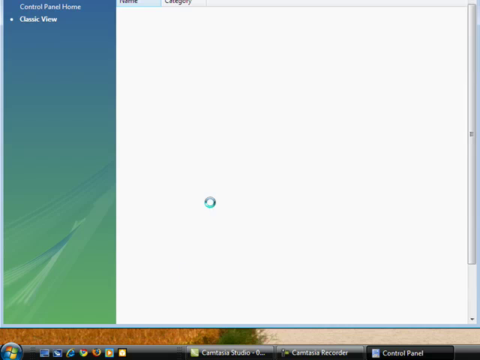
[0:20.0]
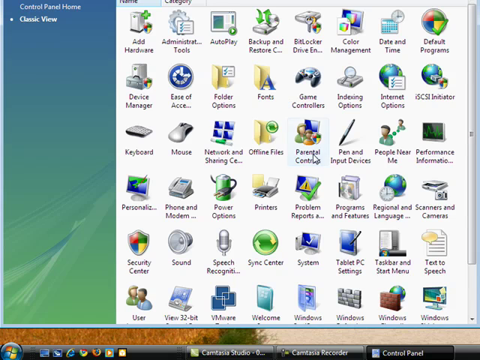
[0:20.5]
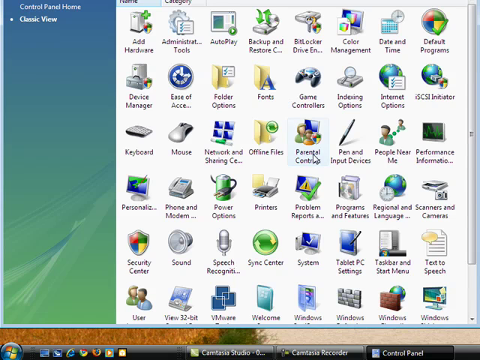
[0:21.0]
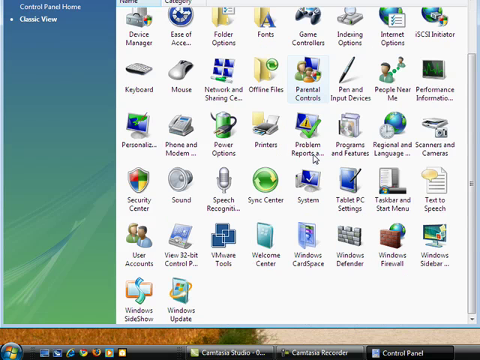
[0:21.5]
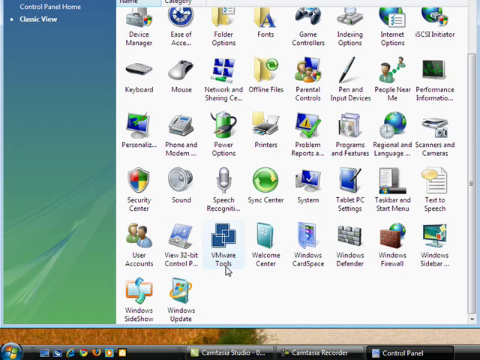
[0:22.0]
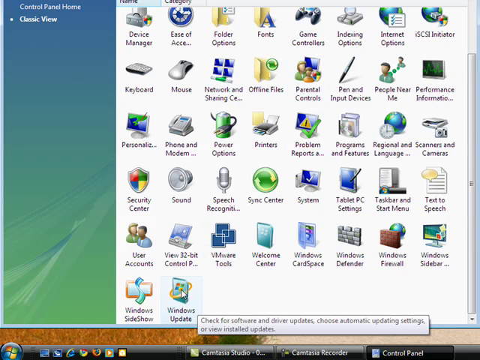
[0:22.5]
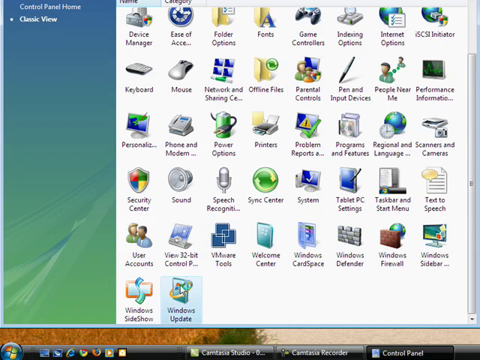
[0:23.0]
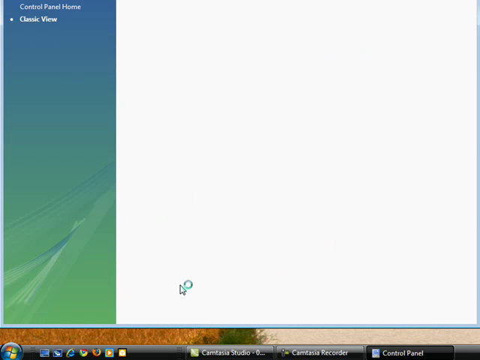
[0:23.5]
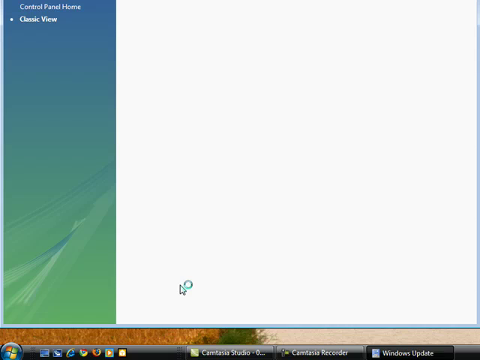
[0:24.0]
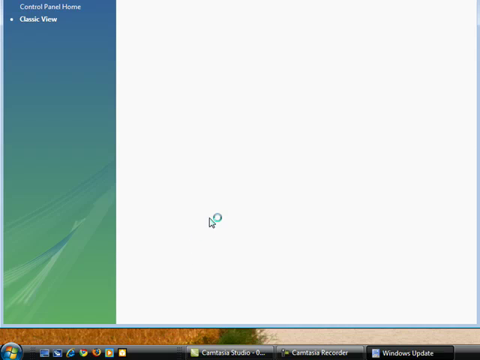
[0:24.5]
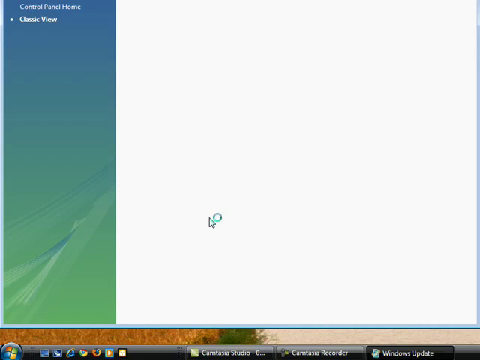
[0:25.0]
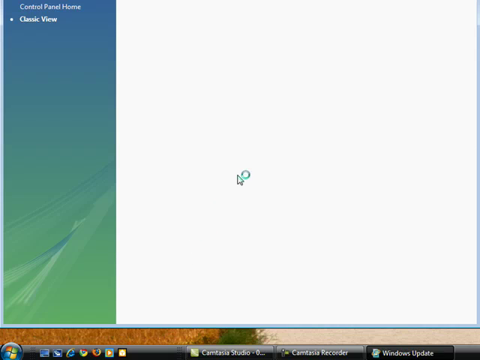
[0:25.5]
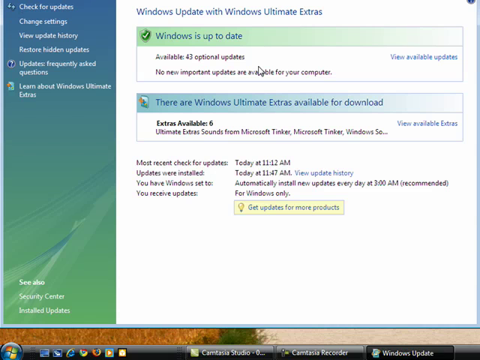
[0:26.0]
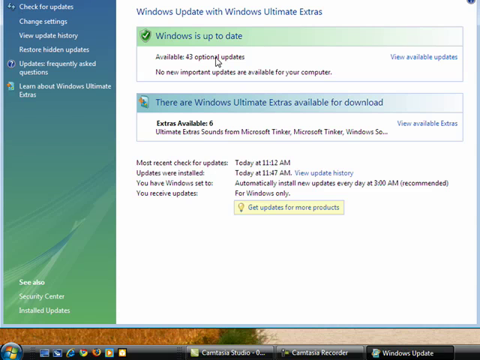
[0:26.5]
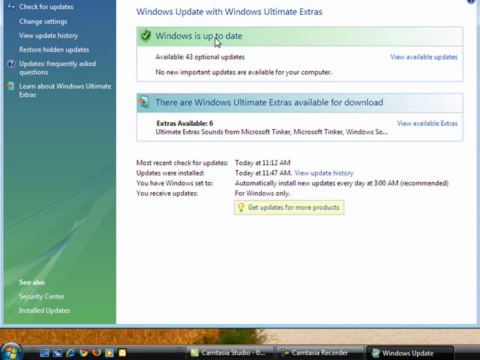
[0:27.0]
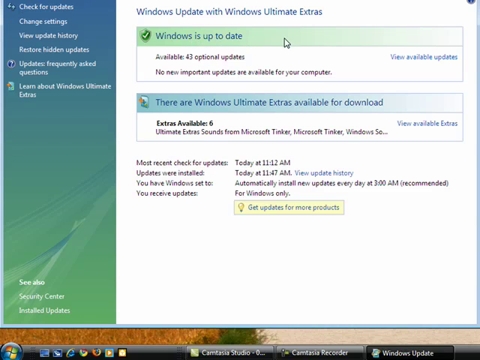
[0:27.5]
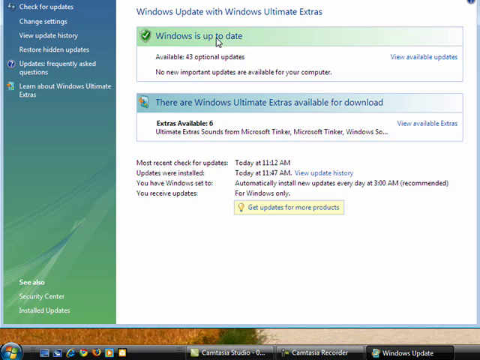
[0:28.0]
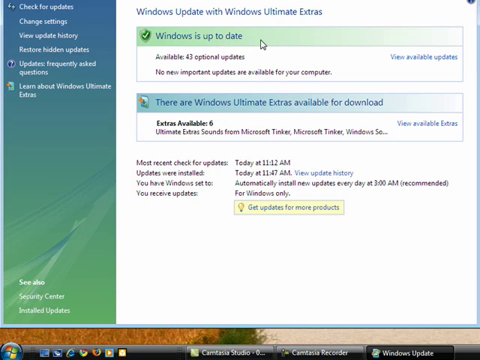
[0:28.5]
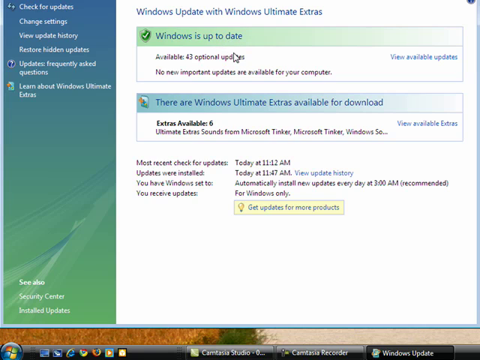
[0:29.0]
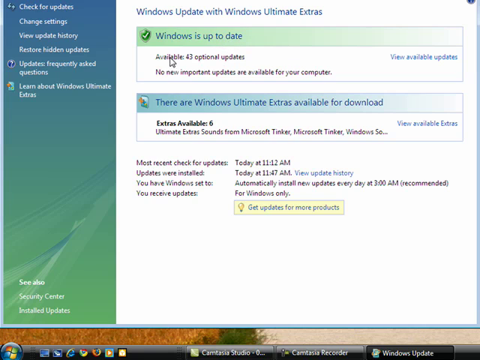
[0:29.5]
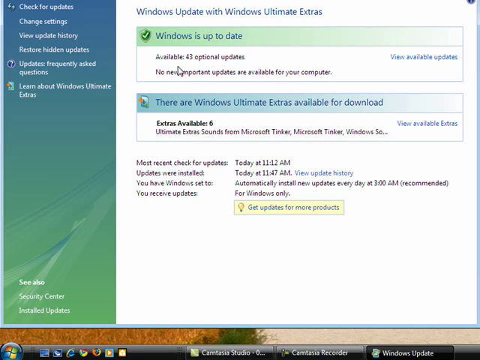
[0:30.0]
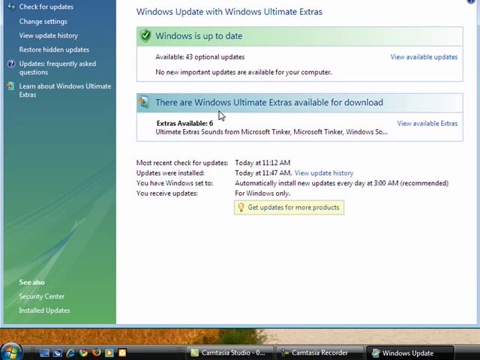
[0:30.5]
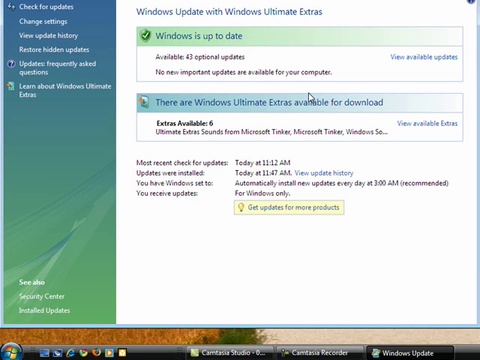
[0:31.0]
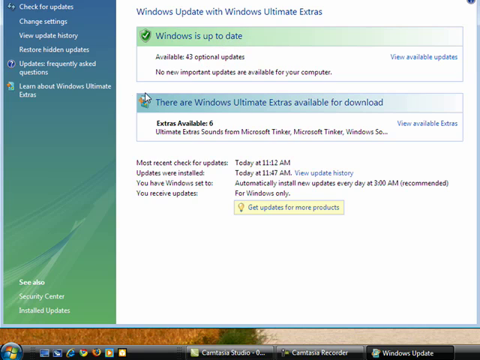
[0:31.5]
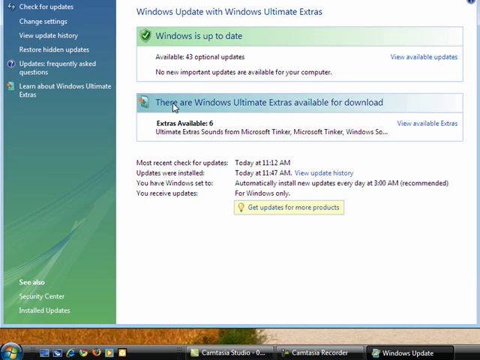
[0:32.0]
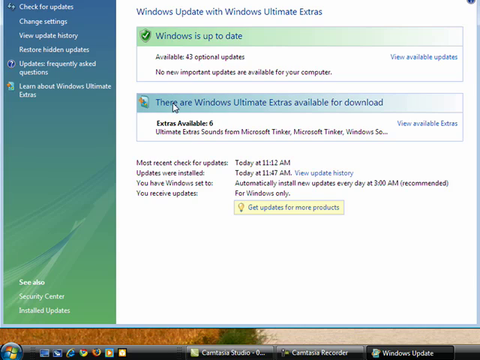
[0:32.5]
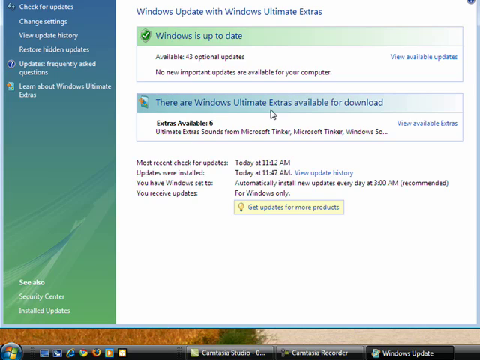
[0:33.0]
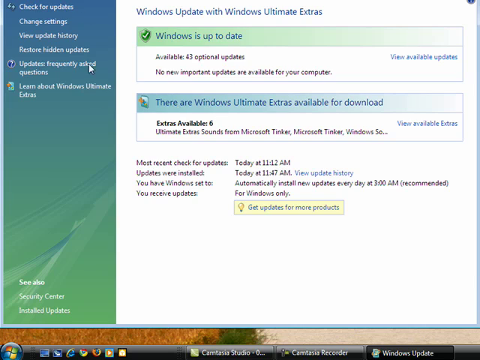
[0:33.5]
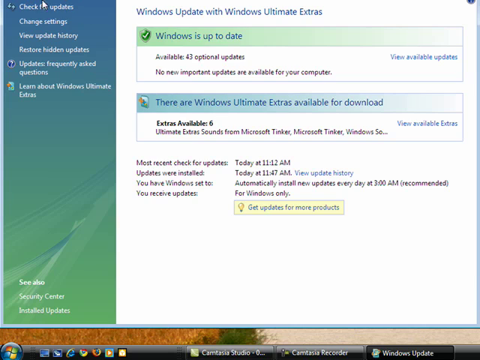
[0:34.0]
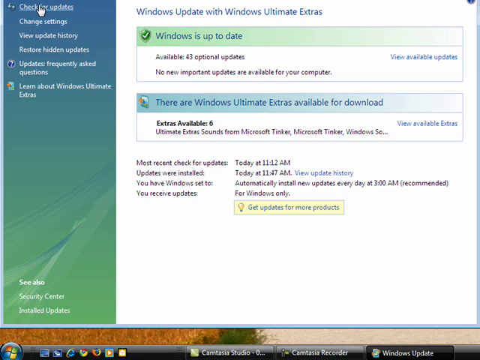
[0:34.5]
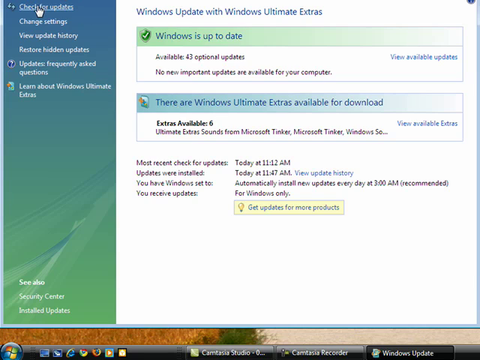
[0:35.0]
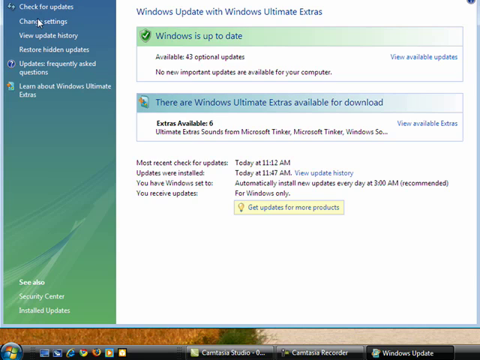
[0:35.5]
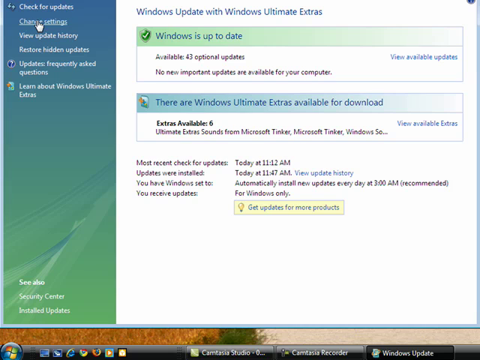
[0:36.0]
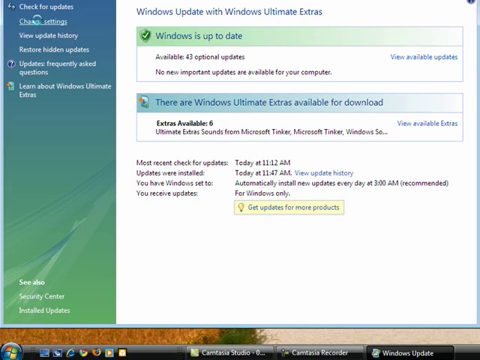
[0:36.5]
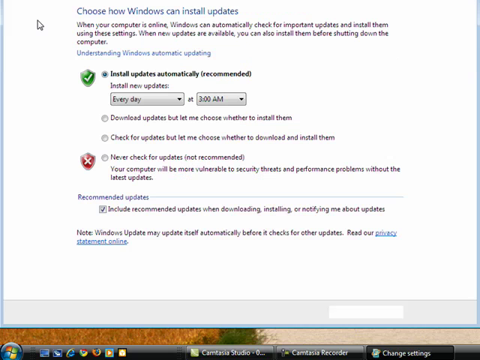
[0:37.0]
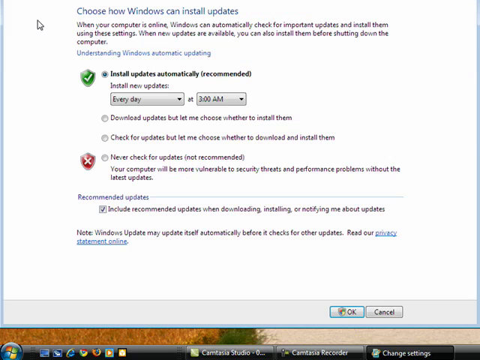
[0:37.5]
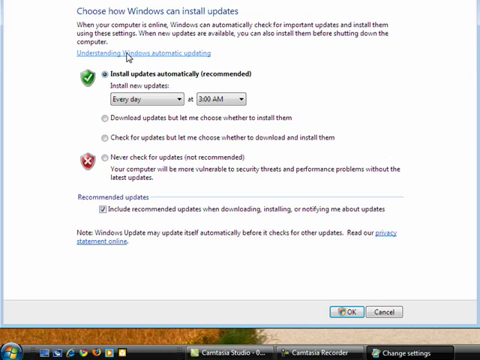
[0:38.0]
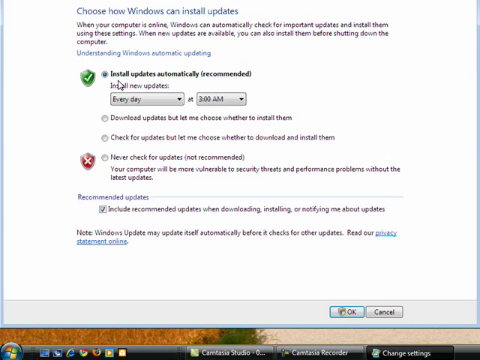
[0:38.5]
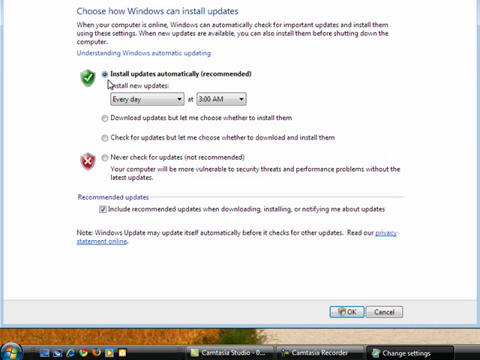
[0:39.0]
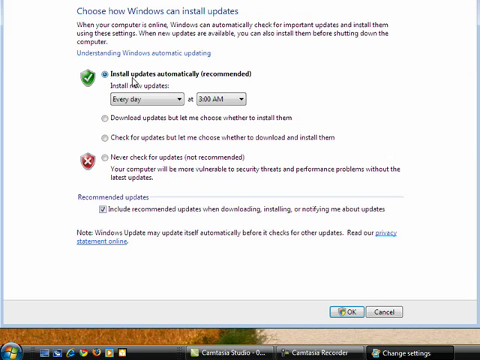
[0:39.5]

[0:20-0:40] Having opened the control panel, the person goes to a Windows update tab. The screen changes to show the many updates available on the computer: it says Windows Ultimate Extras are available for download and that there are also 43 optional updates available. The person clicks the change settings tab and goes to a screen showing the different settings available, including an option to install updates automatically, which is recommended for the computer.